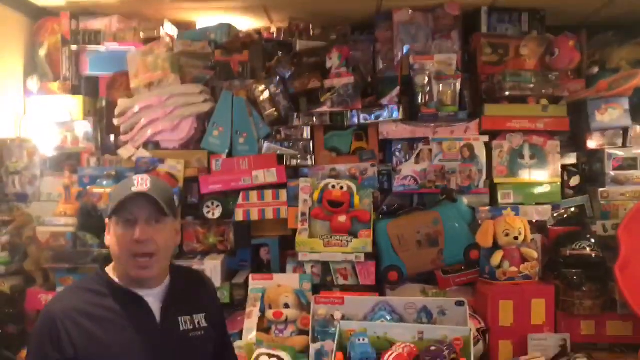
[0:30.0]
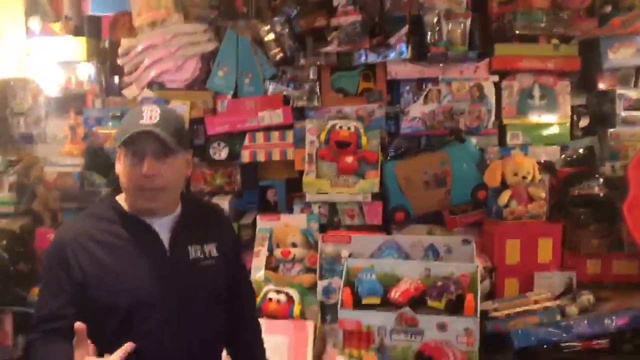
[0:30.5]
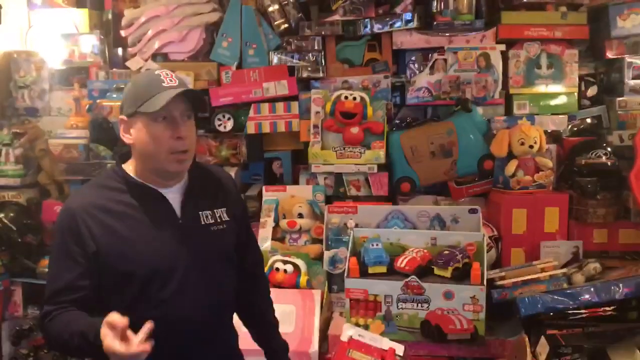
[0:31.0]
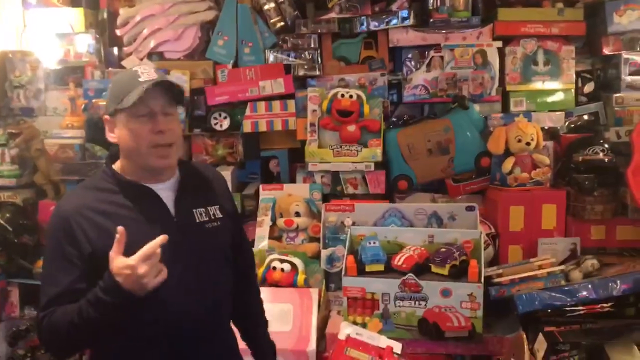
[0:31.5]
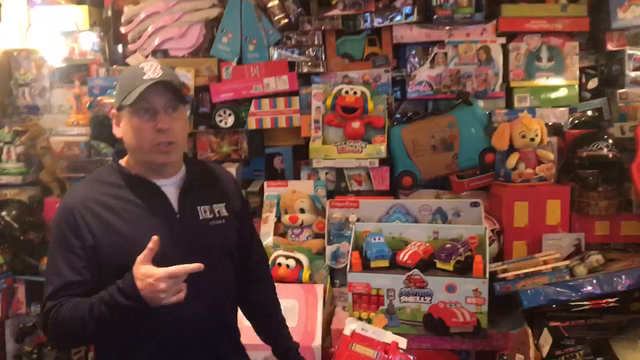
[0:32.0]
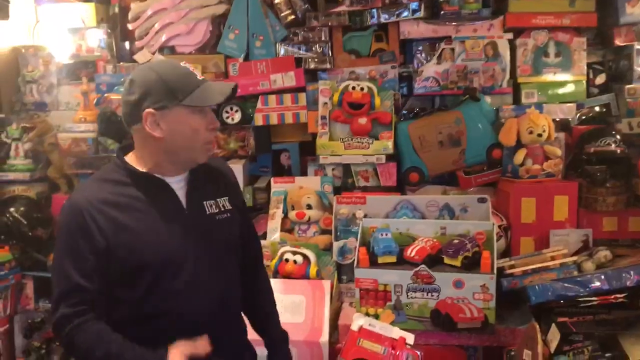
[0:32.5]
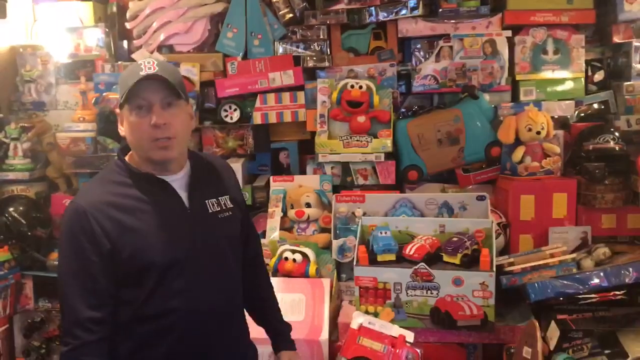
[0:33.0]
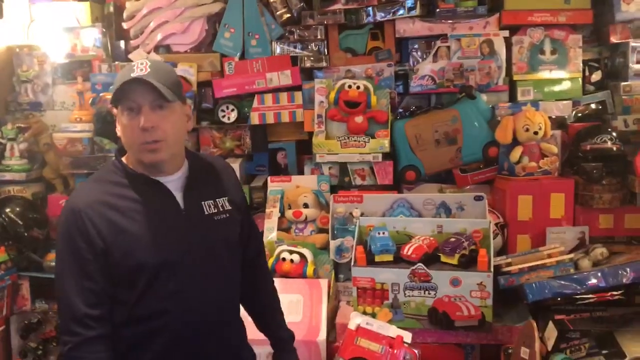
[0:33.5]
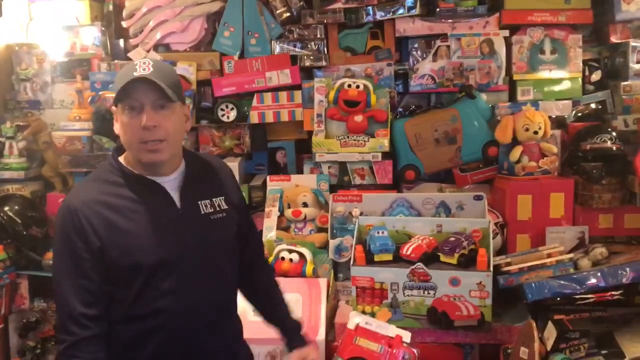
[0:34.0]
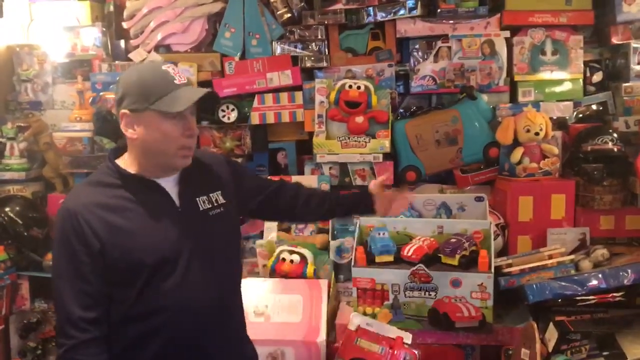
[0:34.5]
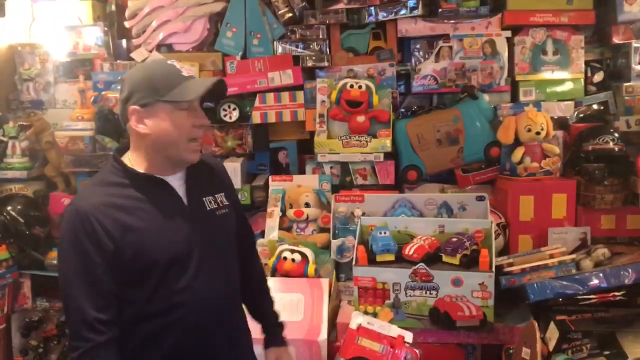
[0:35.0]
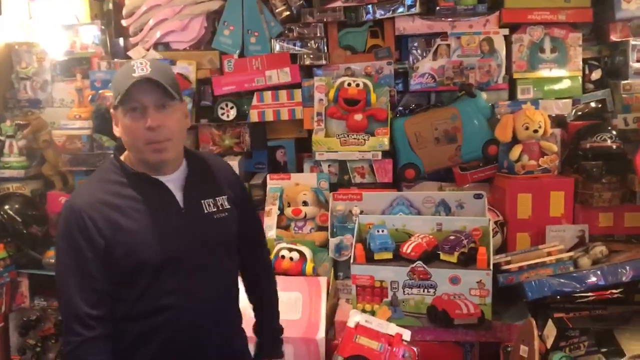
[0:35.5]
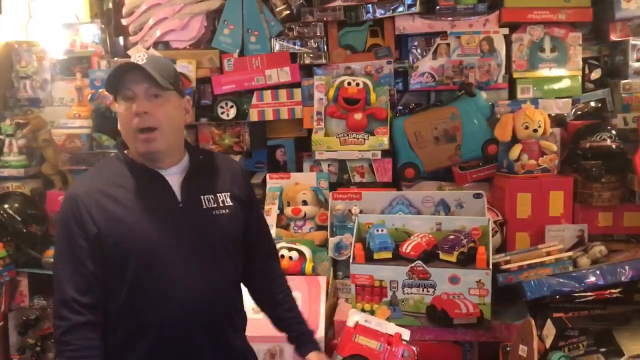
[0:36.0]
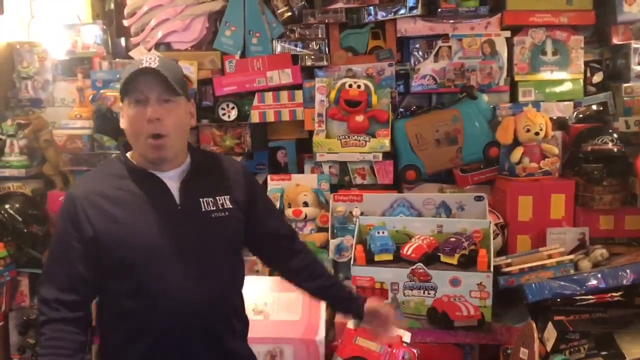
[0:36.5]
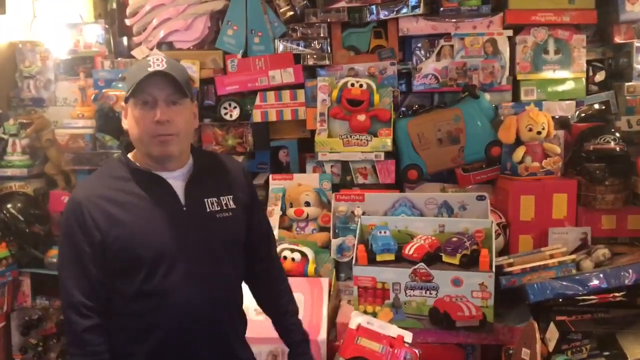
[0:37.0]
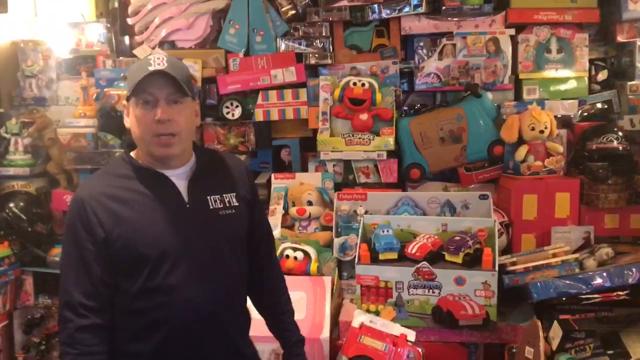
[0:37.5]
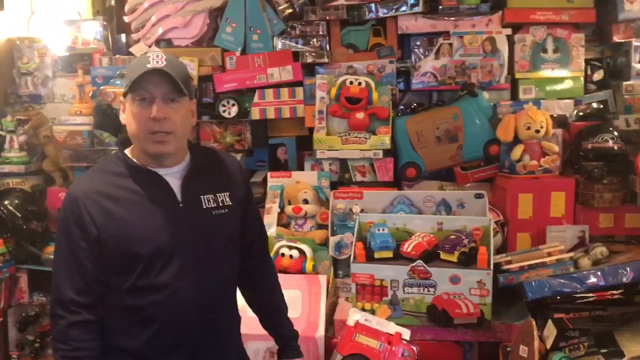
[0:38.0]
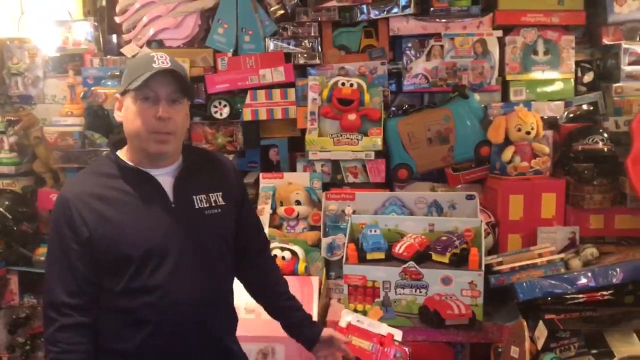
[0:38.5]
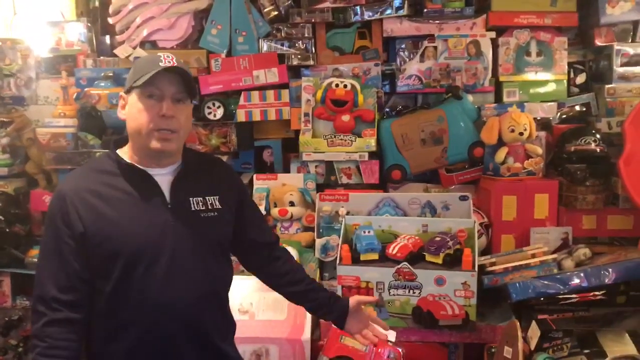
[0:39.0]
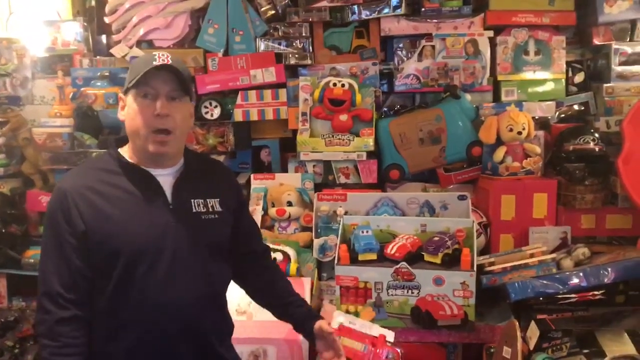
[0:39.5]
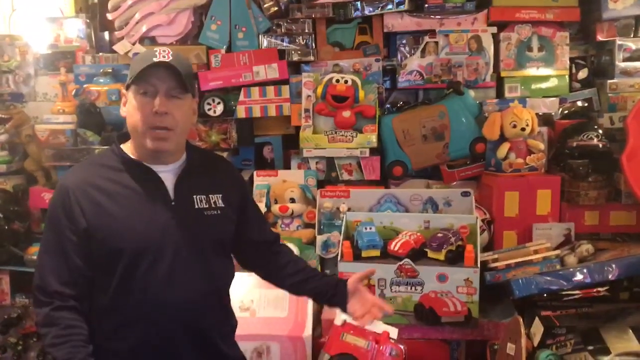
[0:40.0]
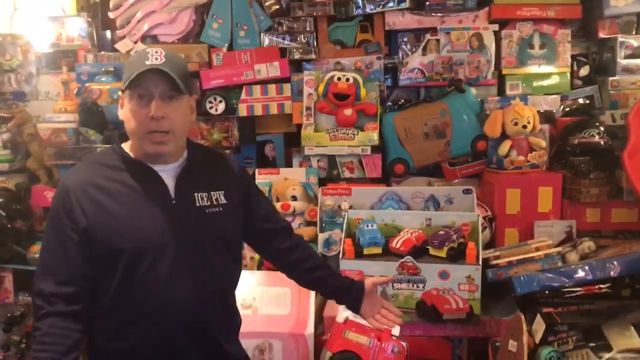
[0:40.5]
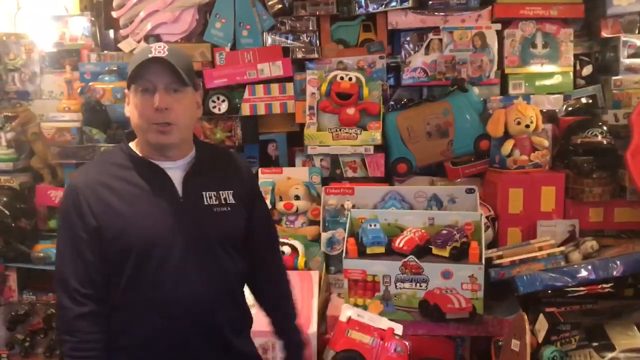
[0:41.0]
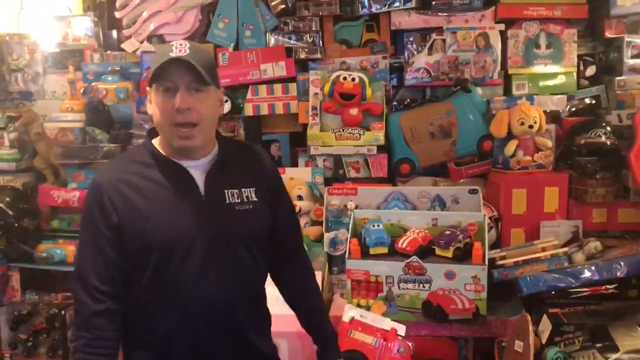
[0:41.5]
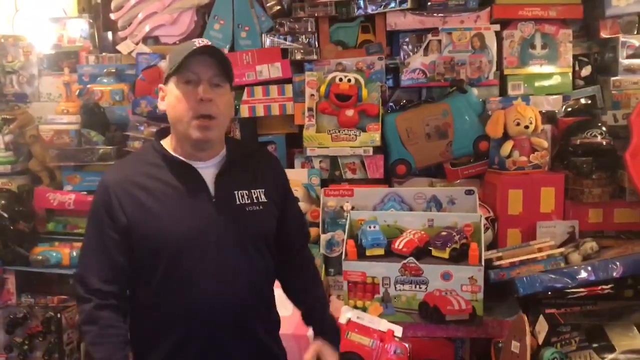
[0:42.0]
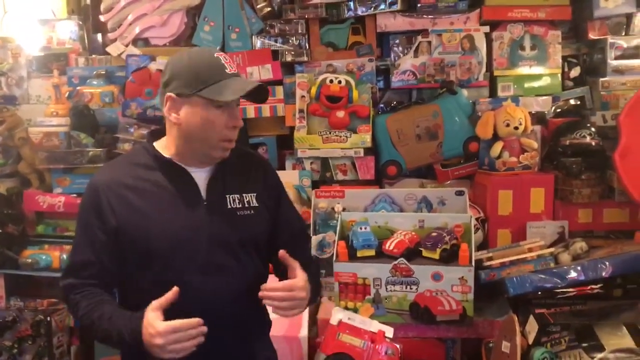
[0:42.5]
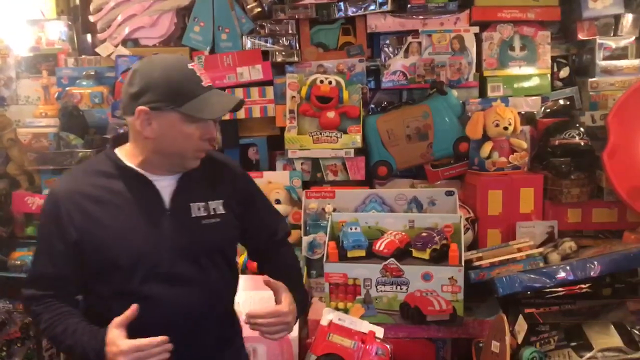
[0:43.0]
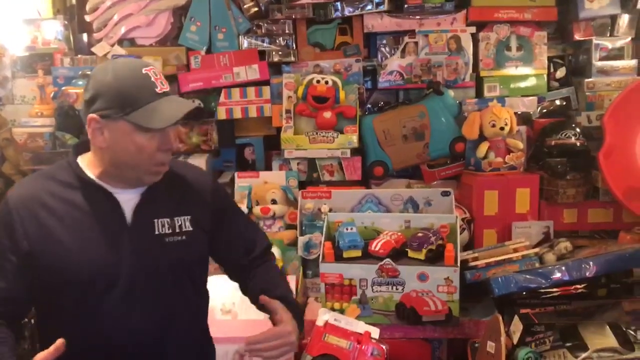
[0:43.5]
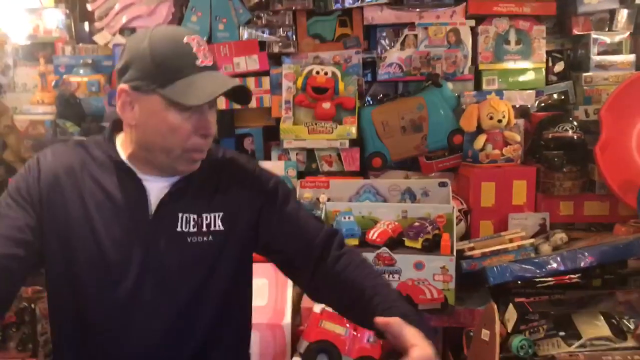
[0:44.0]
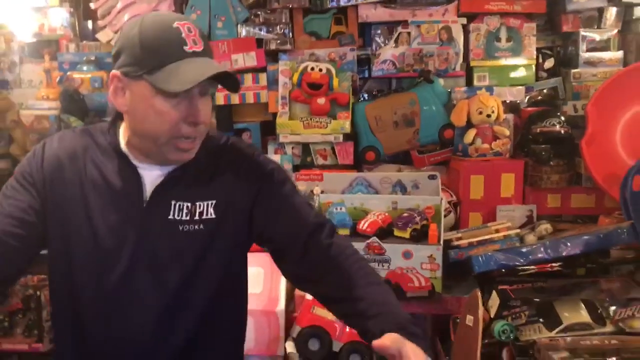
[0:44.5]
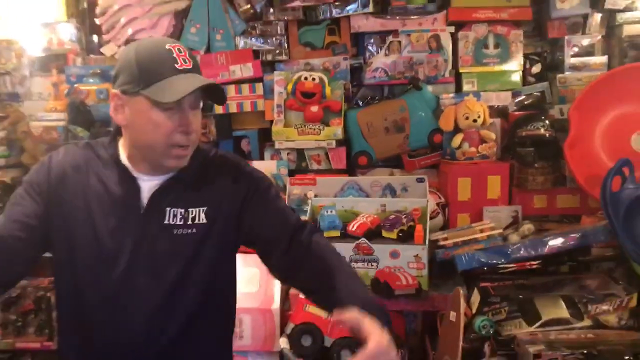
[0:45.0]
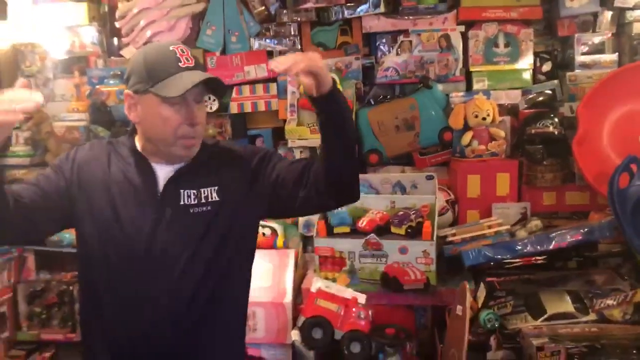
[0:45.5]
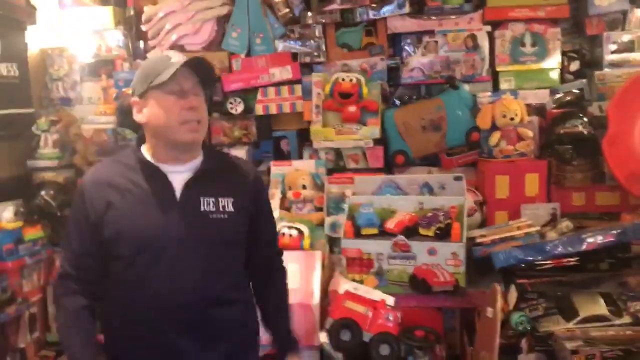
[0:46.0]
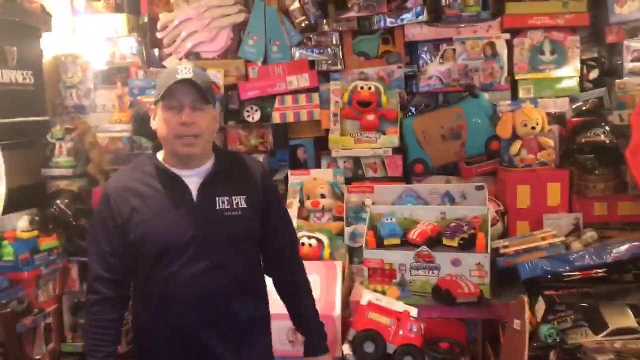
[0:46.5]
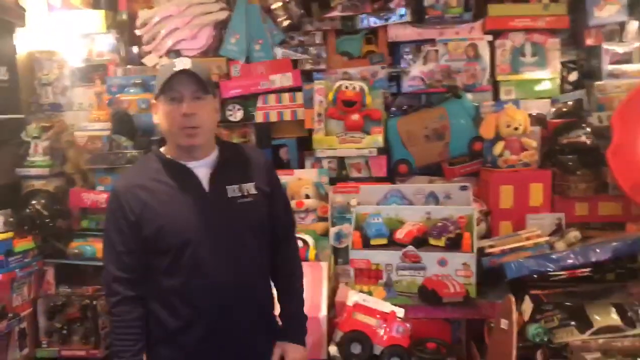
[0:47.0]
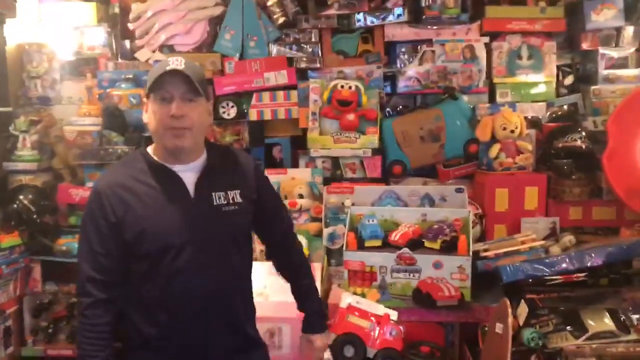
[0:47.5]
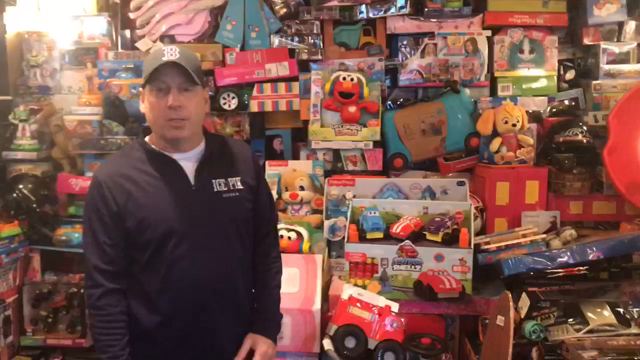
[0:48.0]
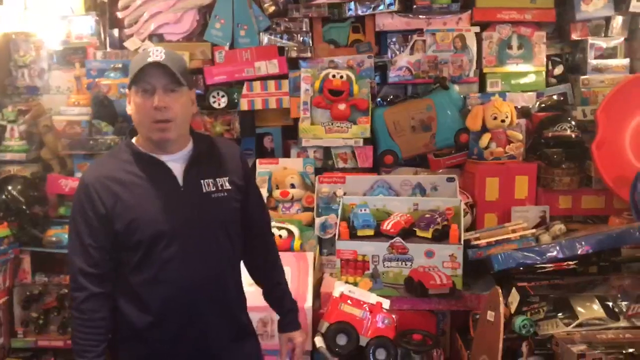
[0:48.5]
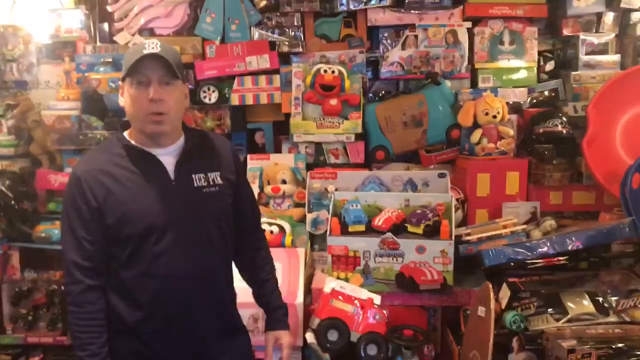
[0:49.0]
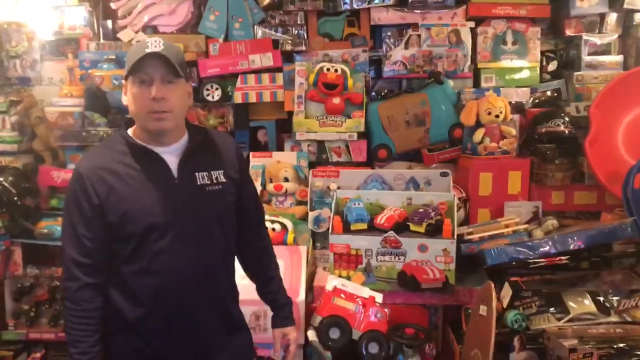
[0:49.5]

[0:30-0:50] Behind the man there appears to be another dog similar to the earlier one, with blue fluff ears and a red nose. A blue box holds what looks like an owl sticking out of a clear window. Another box on its end has yellow, red and blue stripes with the same logo in the middle, too far away to make out. A couple more boxes are above that, and about three more on top of those, right behind his head, a little to the right. On the left side two more packages are on their side. There are three balls, blue, pink and yellow, on the side. He does a gesture like indicating a height and points back with both thumbs as he talks about the stuff behind him. He doesn't turn around to address each individual toy, only gestures at them in general.